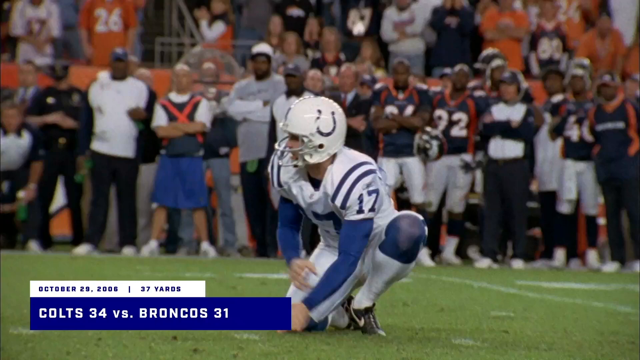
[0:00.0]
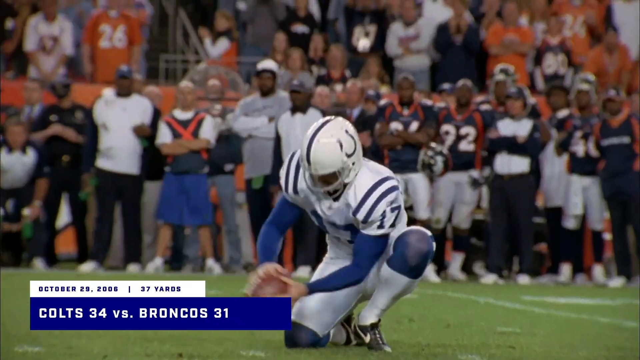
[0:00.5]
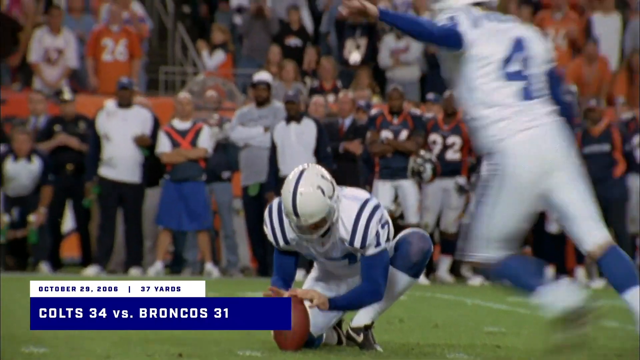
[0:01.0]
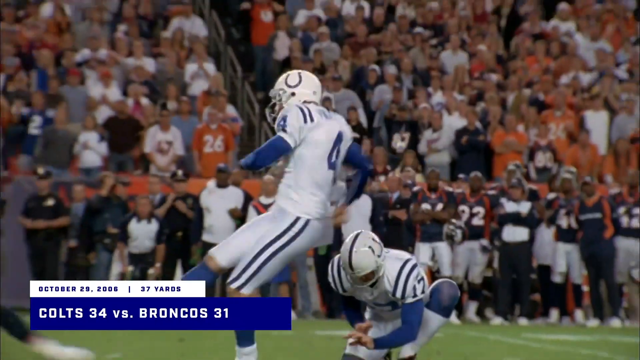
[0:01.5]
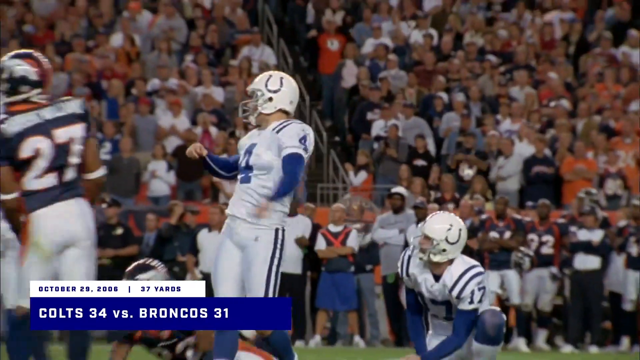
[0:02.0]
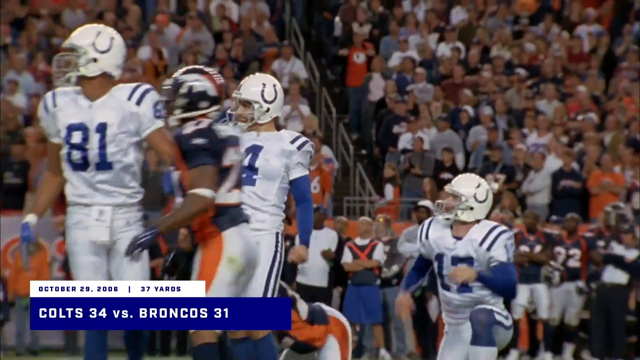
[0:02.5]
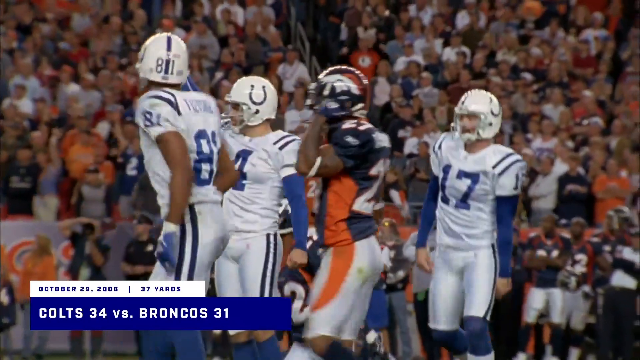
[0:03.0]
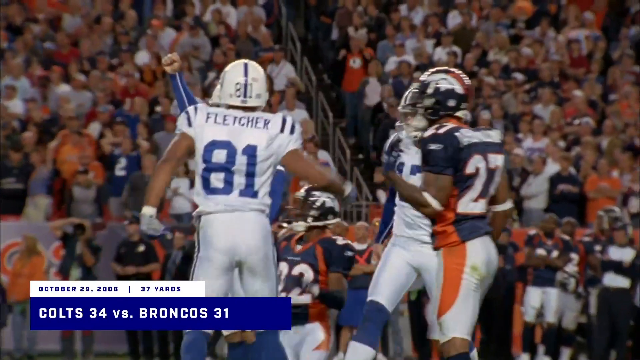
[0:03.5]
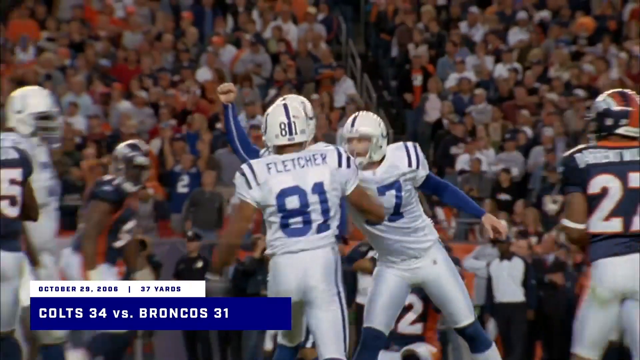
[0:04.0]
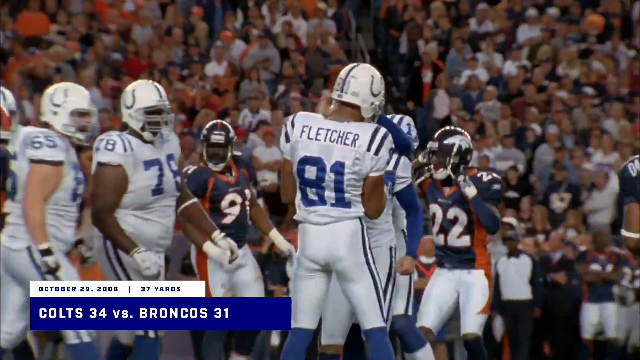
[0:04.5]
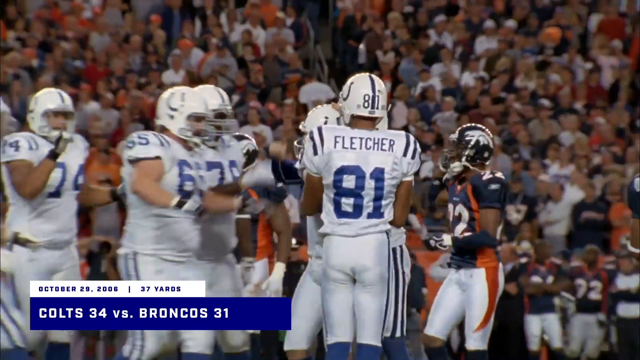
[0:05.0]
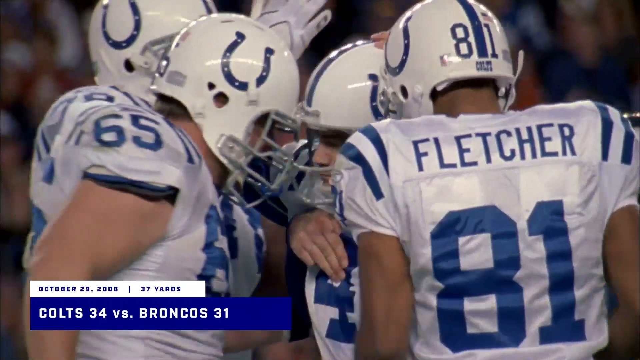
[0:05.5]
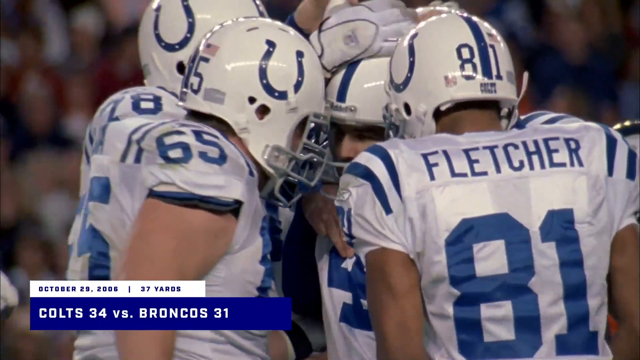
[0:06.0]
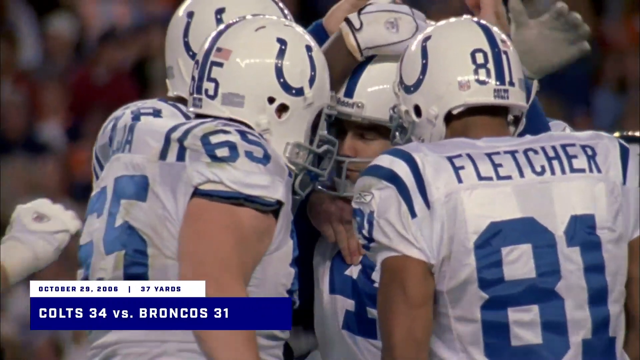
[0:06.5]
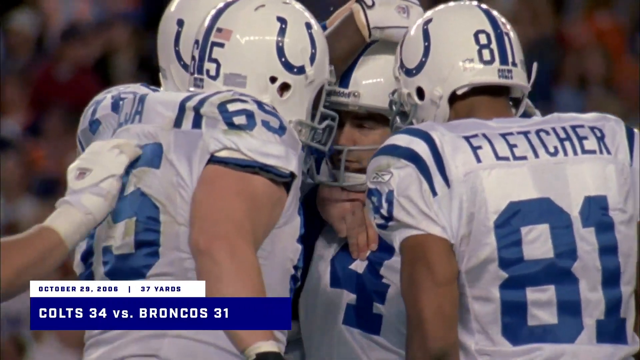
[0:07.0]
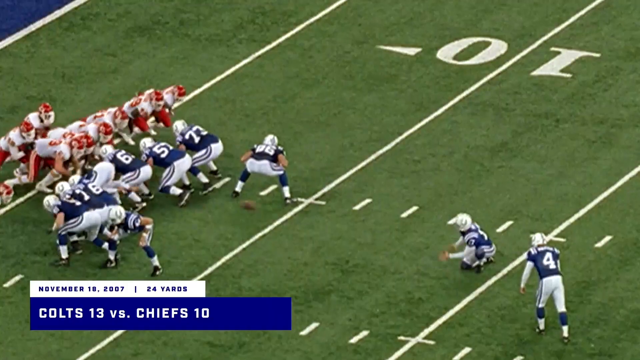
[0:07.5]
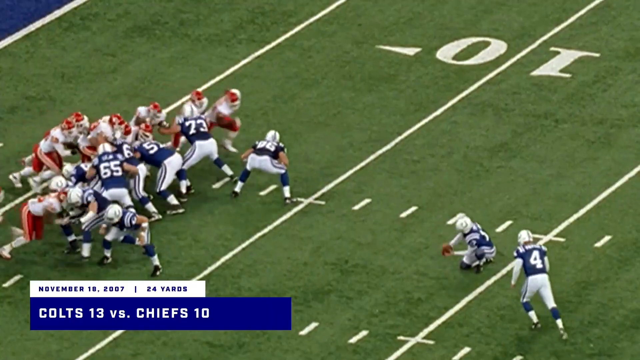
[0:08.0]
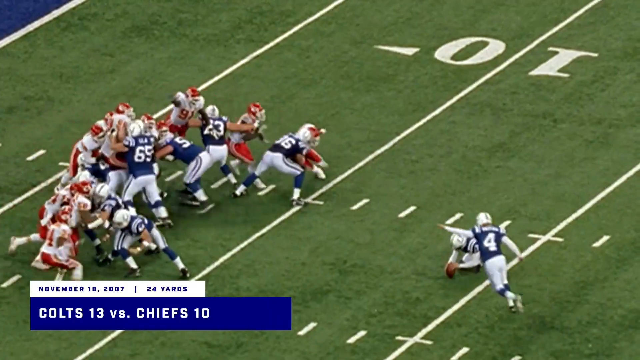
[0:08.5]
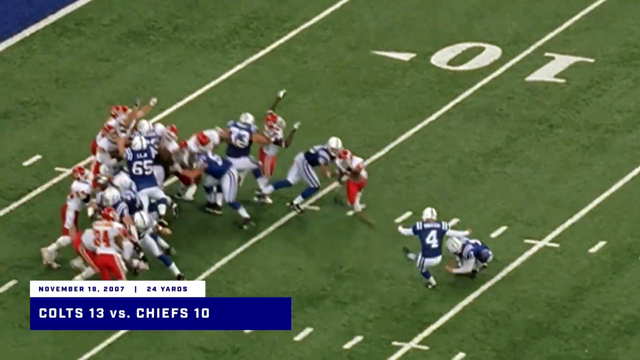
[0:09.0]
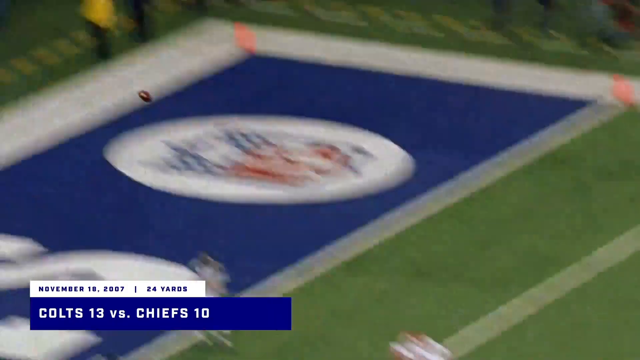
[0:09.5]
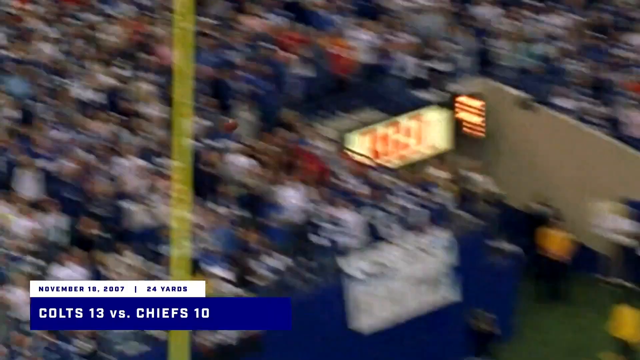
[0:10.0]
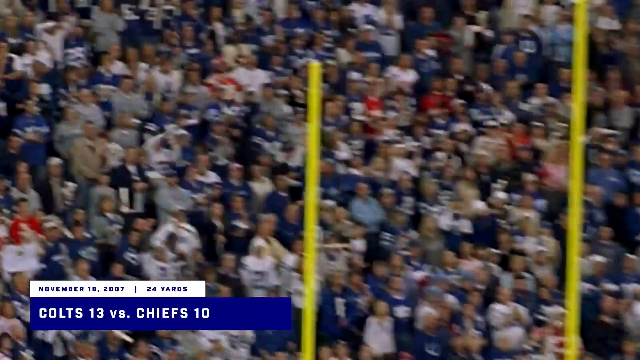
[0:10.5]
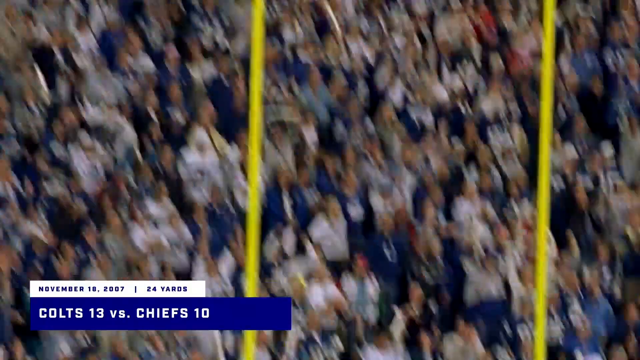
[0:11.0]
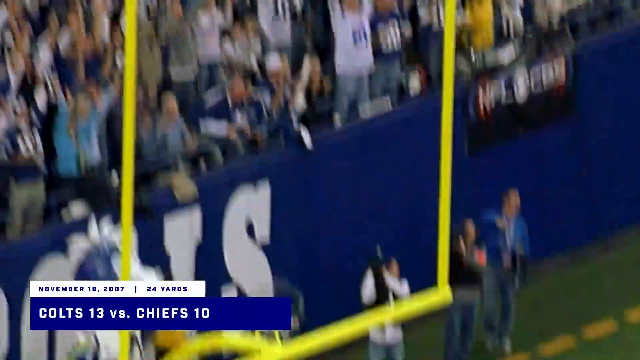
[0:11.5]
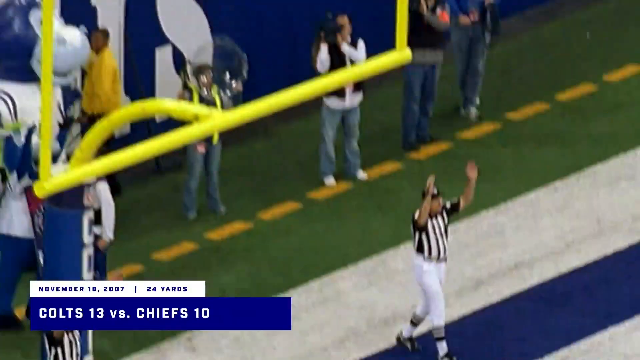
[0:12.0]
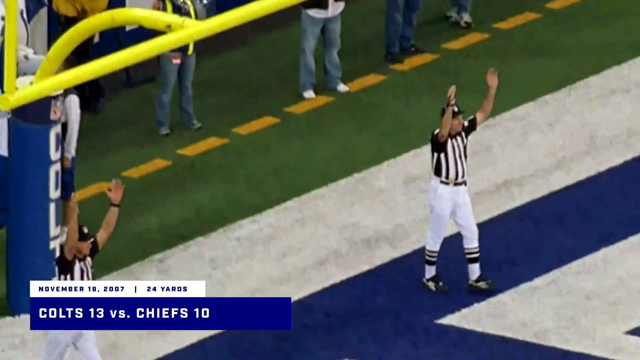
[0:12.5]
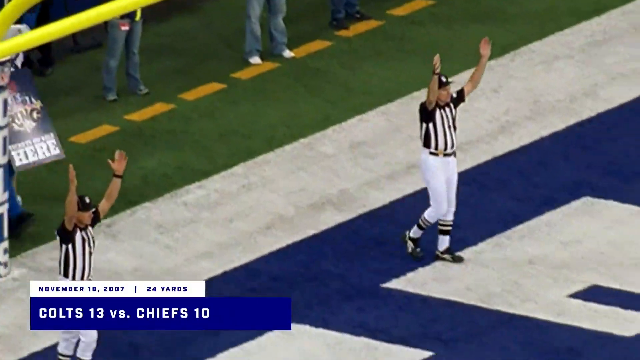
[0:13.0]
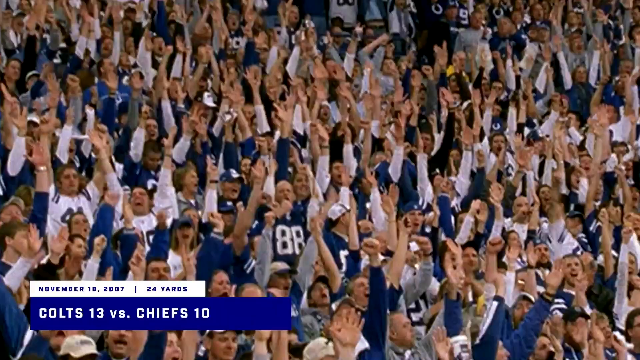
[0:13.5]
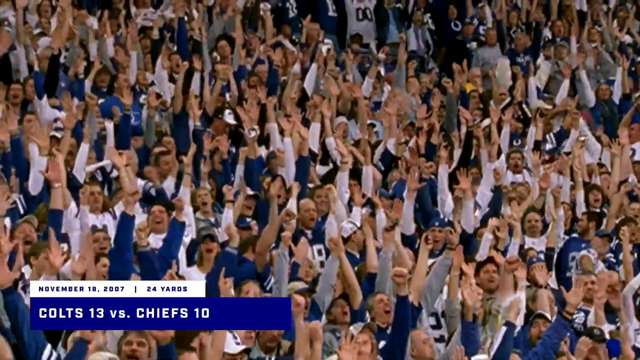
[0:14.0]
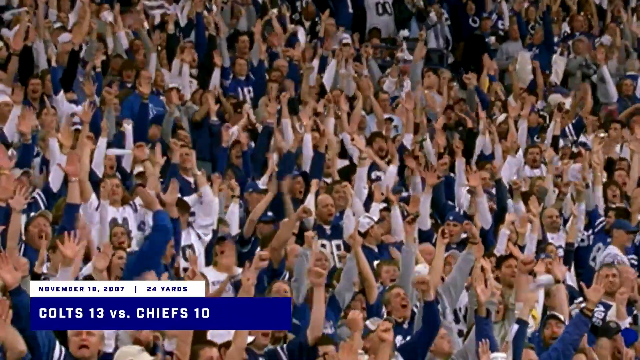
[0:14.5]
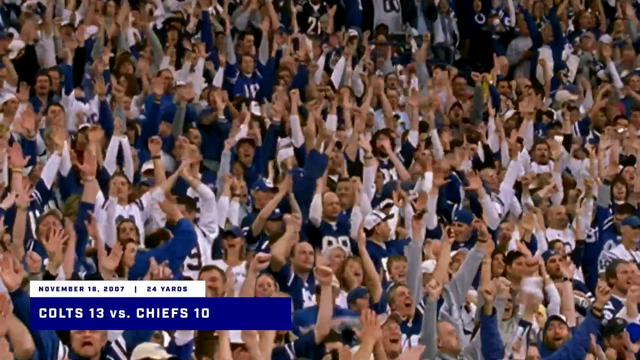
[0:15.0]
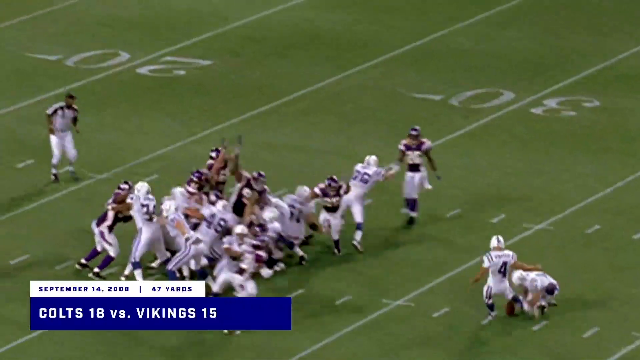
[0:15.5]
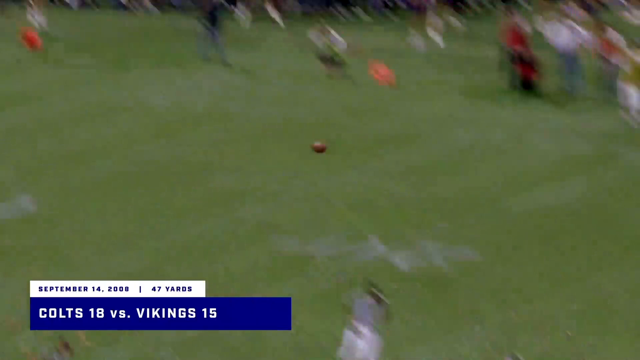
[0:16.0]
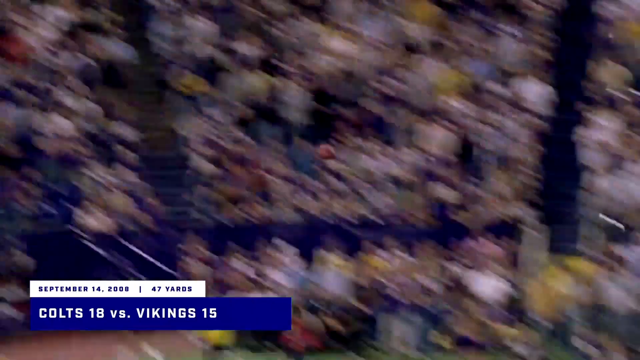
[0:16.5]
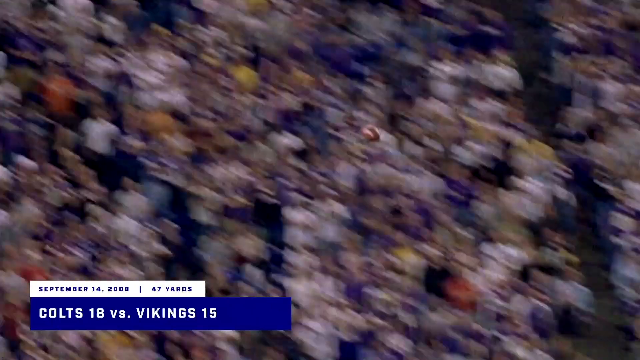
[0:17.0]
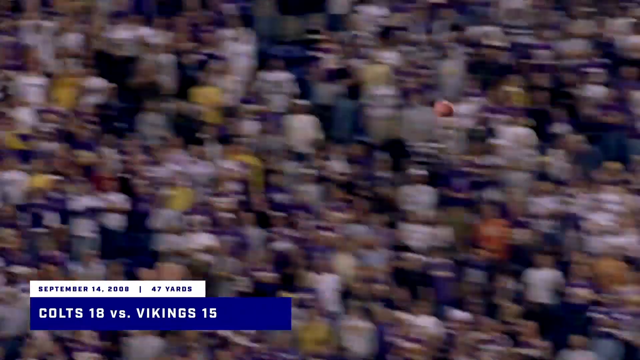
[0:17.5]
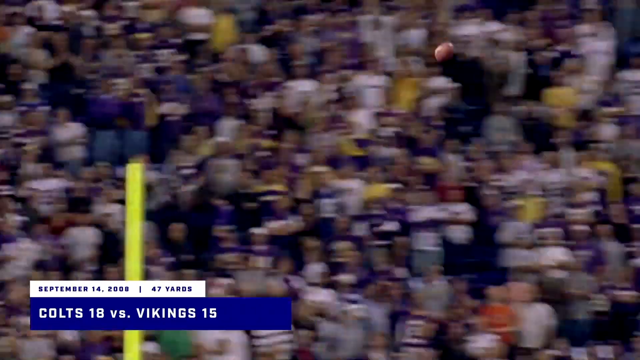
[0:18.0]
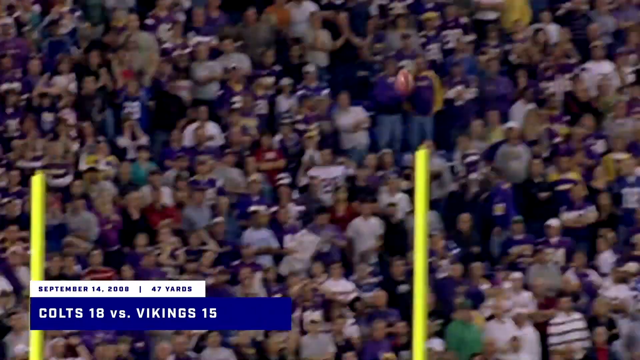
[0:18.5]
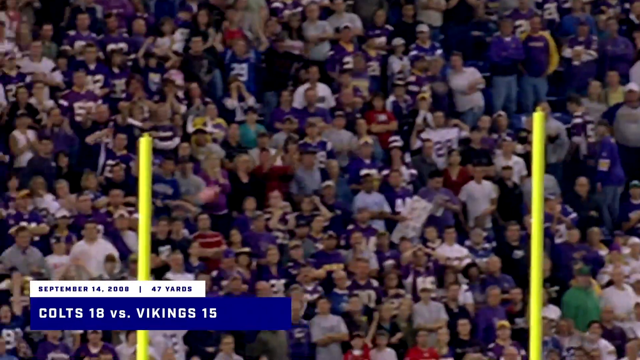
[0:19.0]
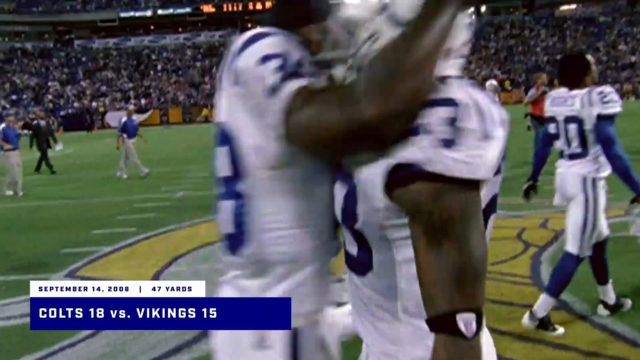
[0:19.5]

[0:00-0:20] A player catches the football and a kicker kicks it. The team wears white jerseys with blue numbers and blue lettering, and the symbol on their helmets suggests they are apparently the Colts. Text at the bottom of the screen reads "Colts versus Broncos." After the kick, the kicker puts his arm up in celebration, and the field goal is good. Referees in black and white uniforms put their hands up to signal the kick is good, and the entire team celebrates. The attempt is a 37-yard field goal.